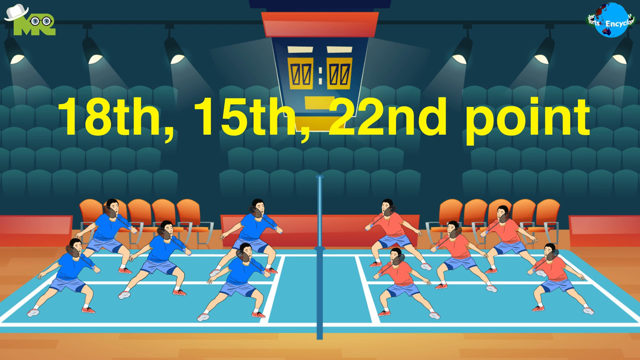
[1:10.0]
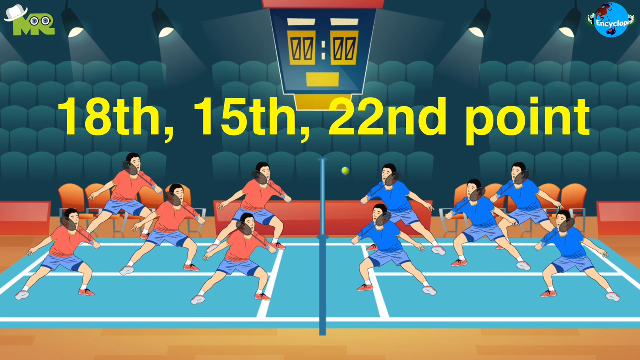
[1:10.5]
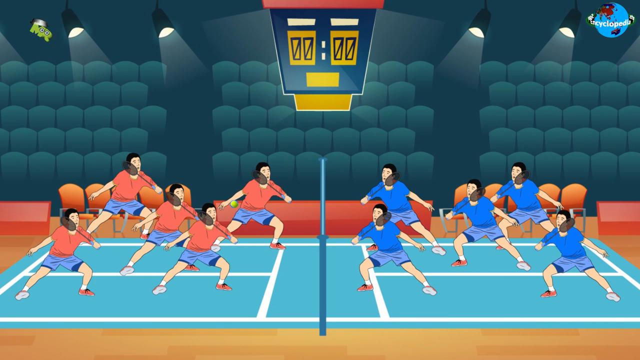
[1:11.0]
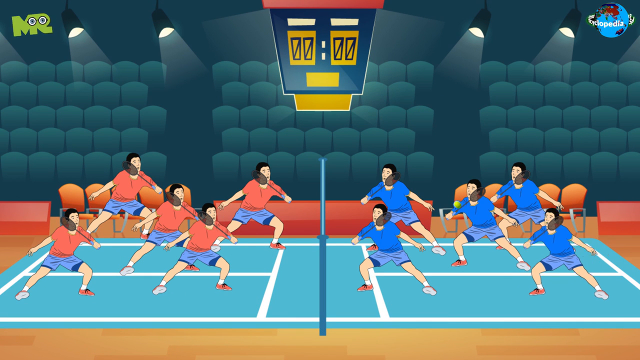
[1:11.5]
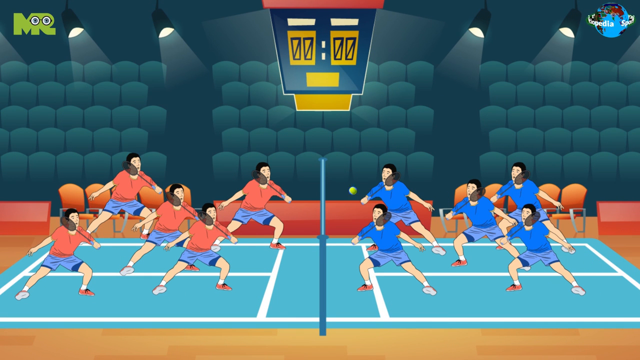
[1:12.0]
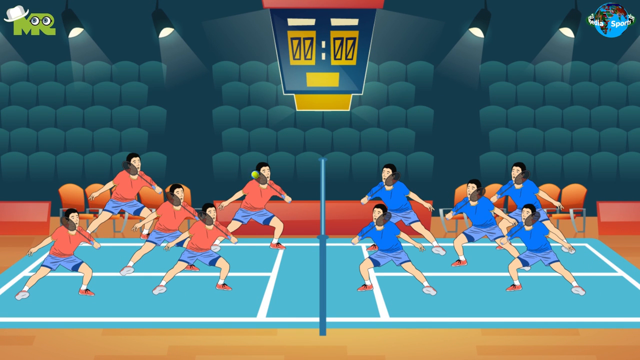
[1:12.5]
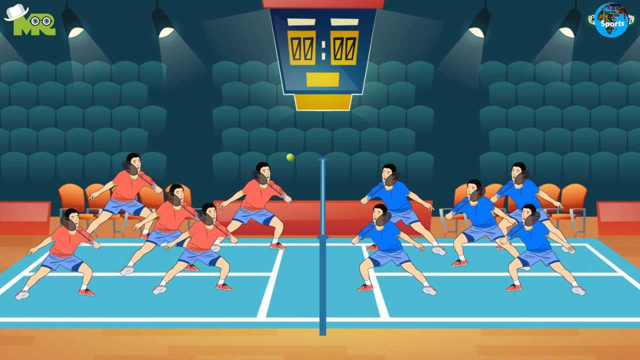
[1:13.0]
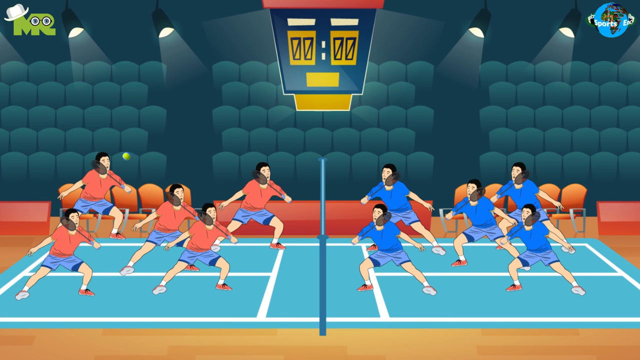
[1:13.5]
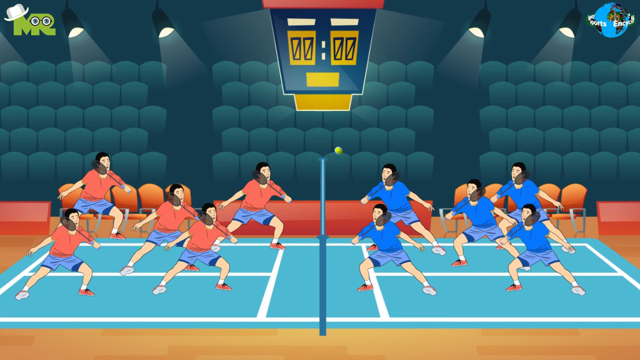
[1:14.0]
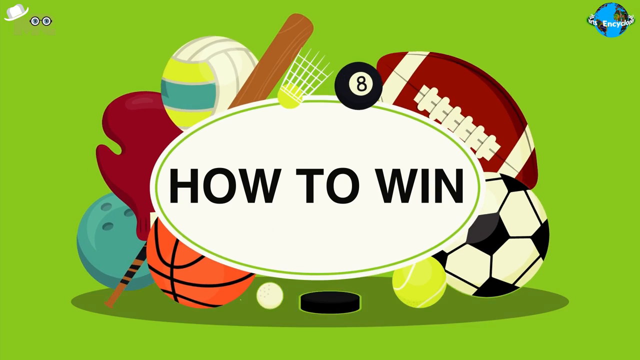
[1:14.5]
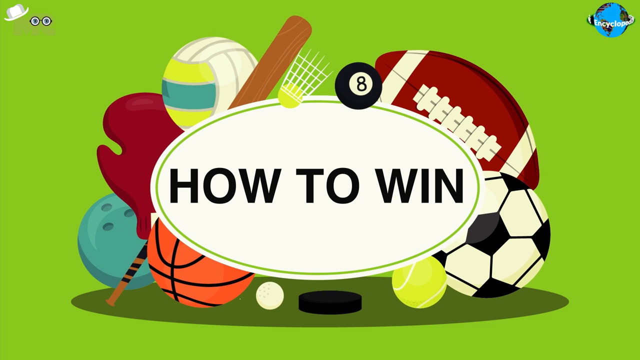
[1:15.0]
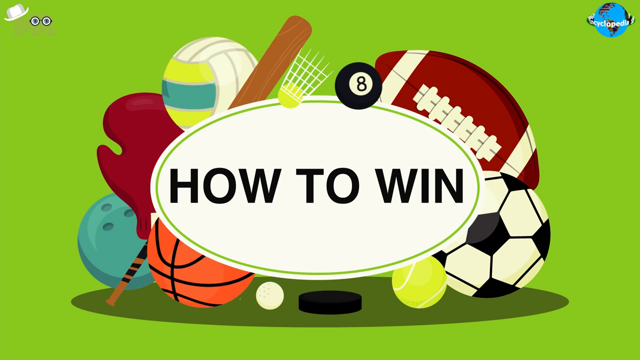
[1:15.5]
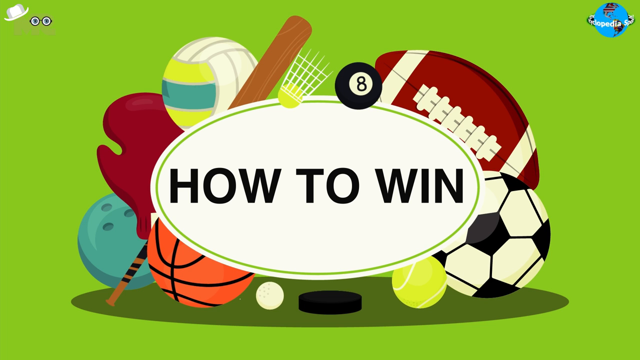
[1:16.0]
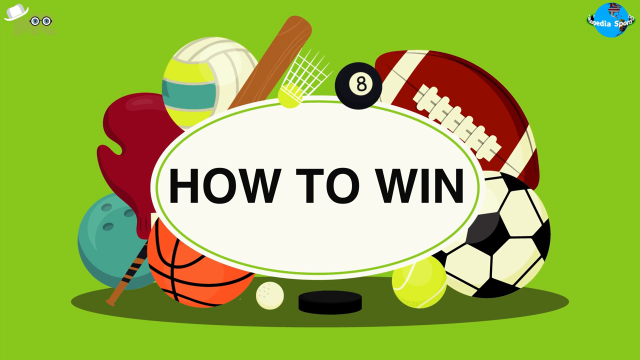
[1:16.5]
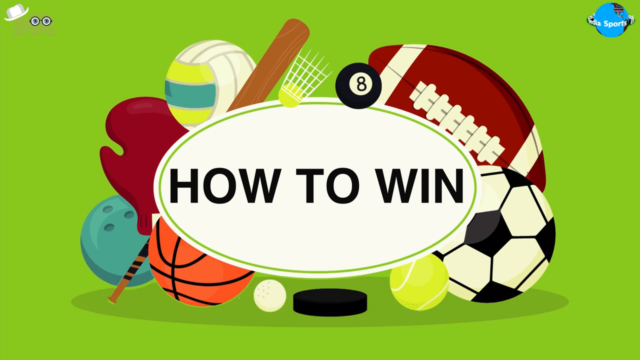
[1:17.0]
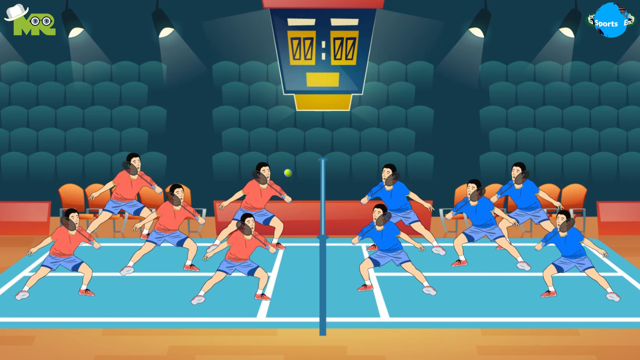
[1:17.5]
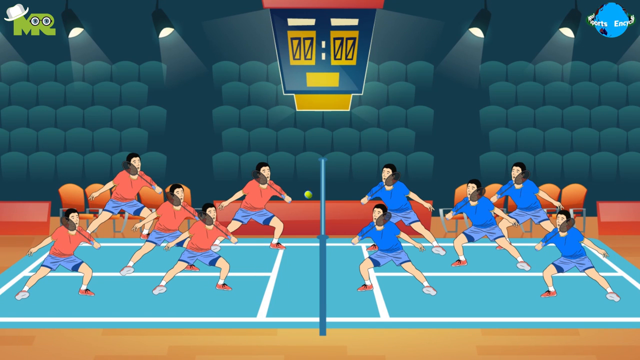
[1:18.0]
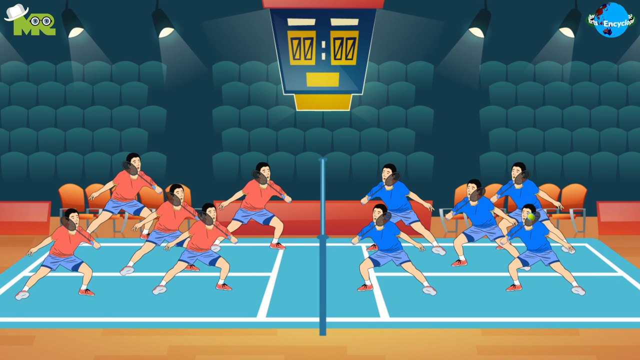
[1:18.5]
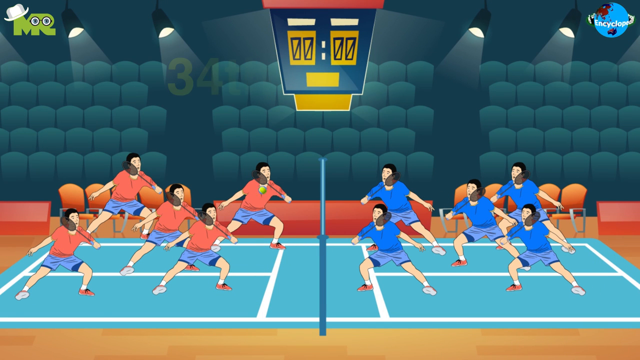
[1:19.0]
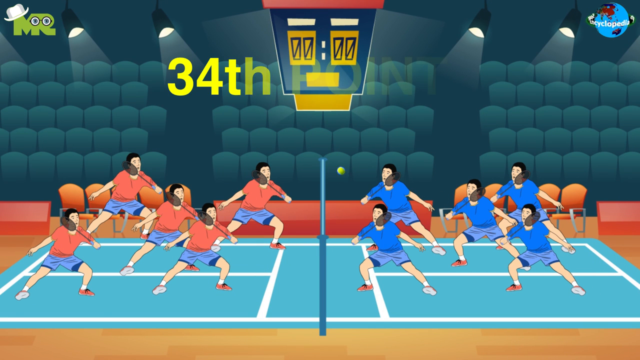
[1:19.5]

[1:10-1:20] More of the green background appears with sports equipment that is not gathered together as usual but just laying there. Then it blows up and reads "how to win", with the sports equipment all around the circle in the text. At the top, text reads "34th point". Then "how to win" appears again.